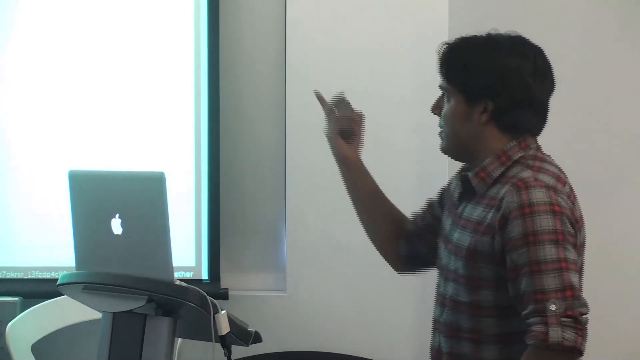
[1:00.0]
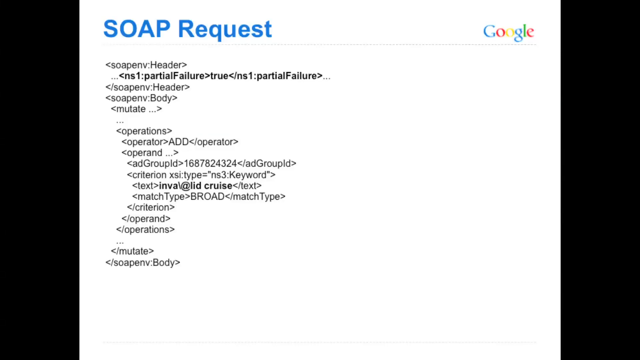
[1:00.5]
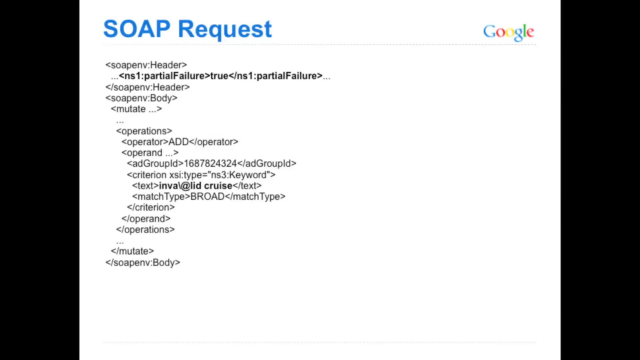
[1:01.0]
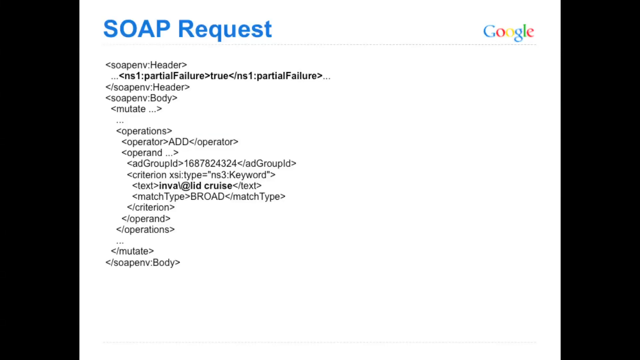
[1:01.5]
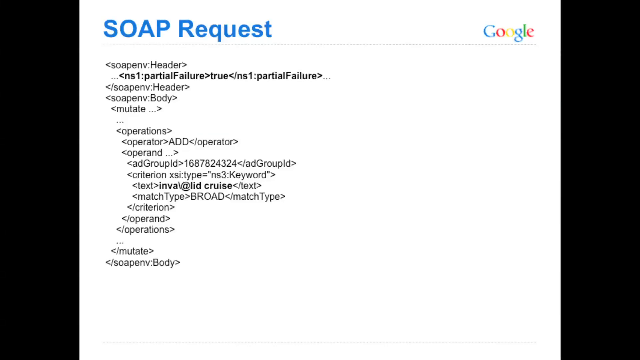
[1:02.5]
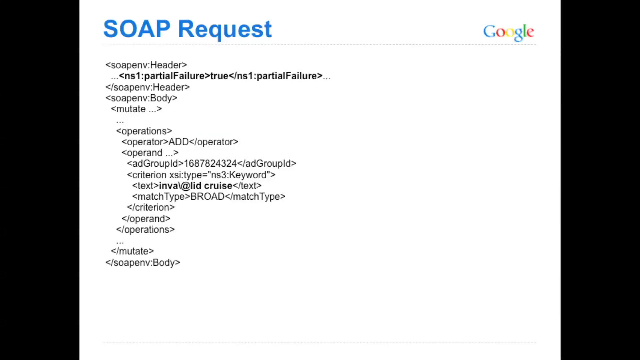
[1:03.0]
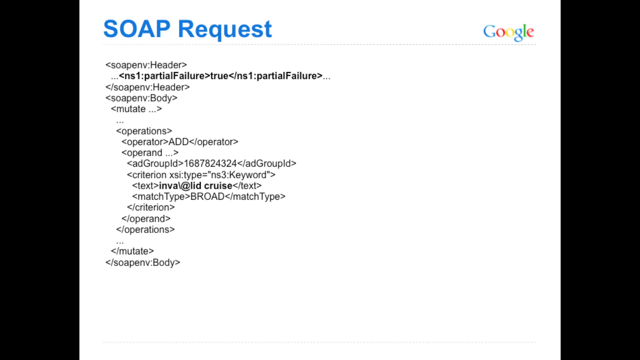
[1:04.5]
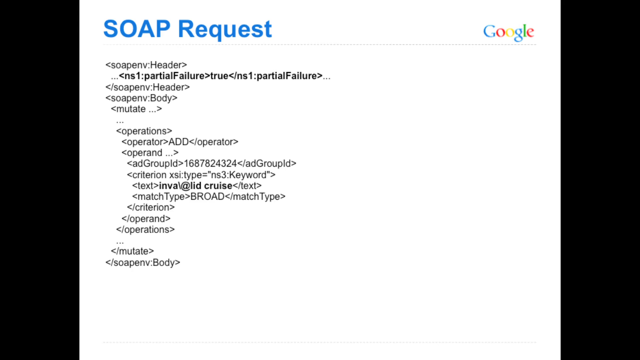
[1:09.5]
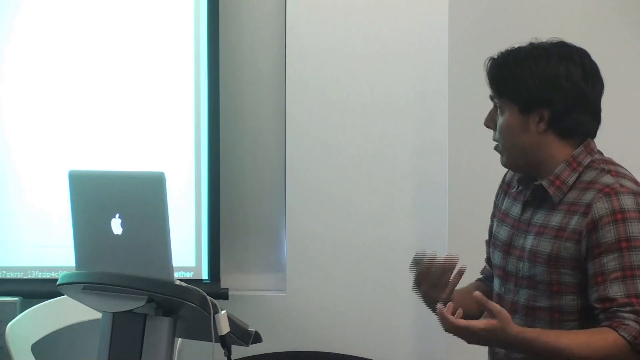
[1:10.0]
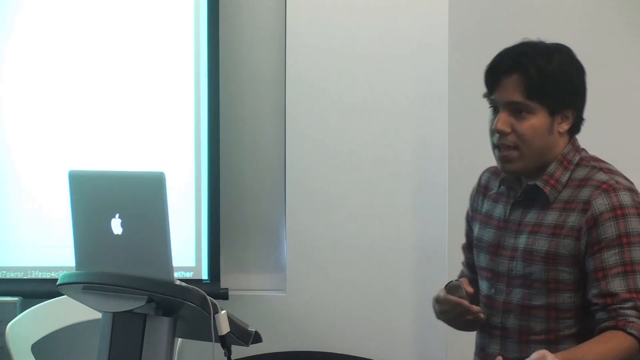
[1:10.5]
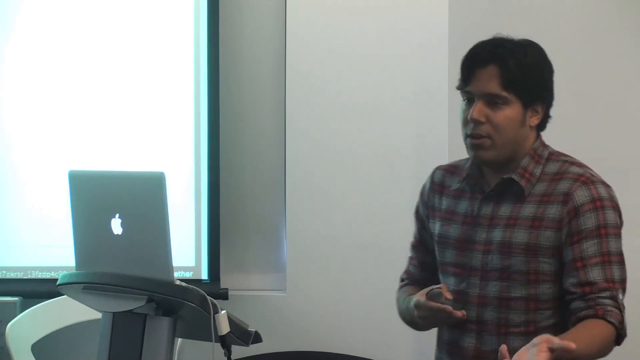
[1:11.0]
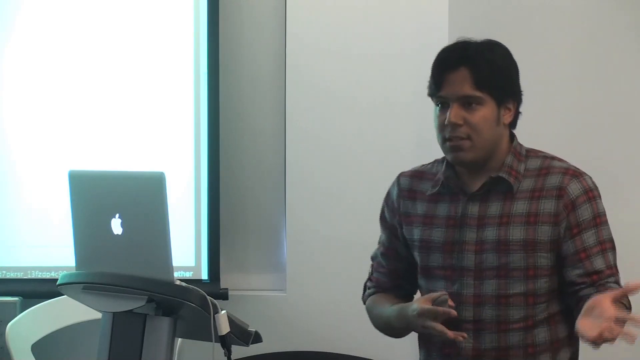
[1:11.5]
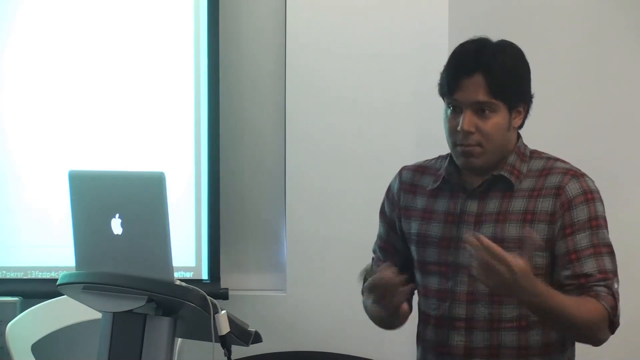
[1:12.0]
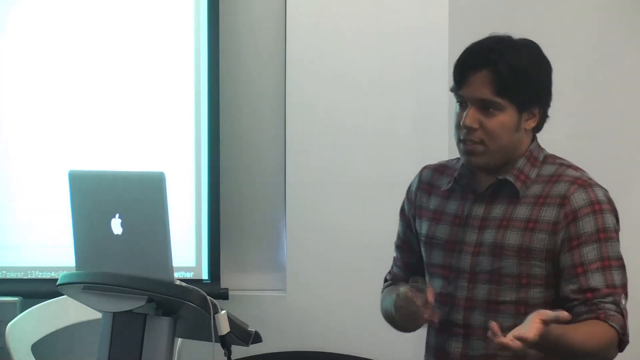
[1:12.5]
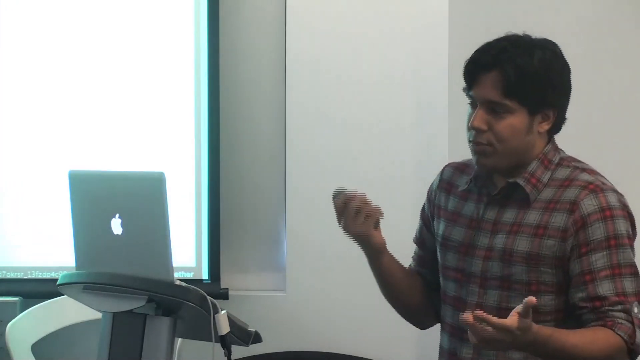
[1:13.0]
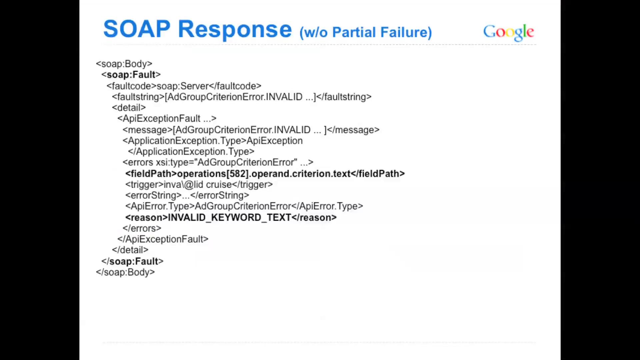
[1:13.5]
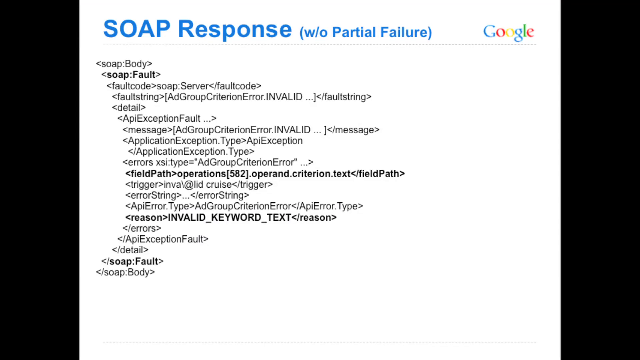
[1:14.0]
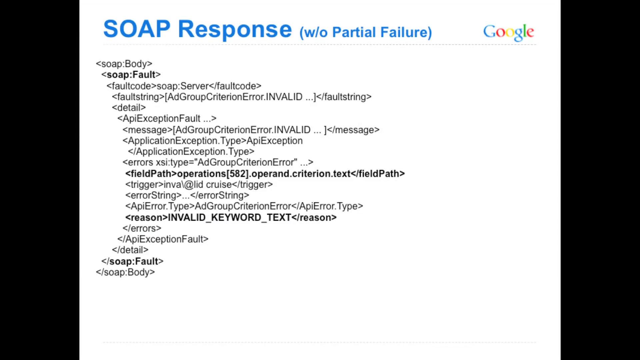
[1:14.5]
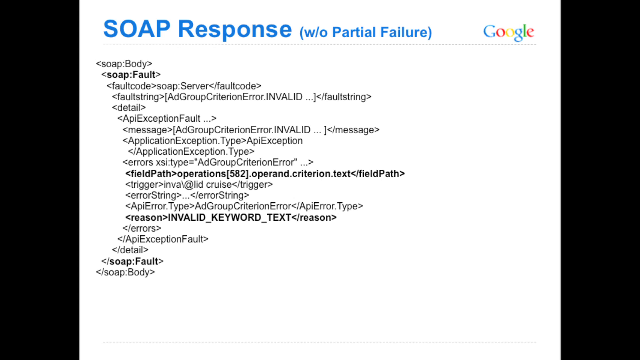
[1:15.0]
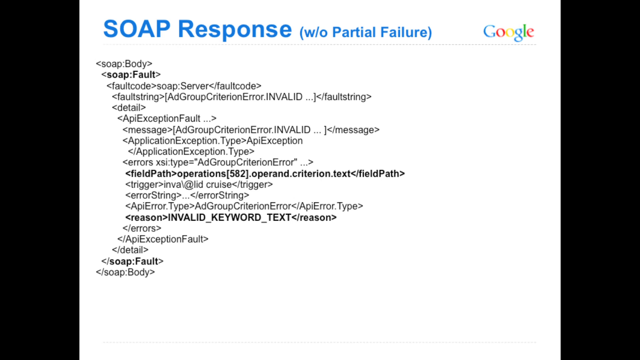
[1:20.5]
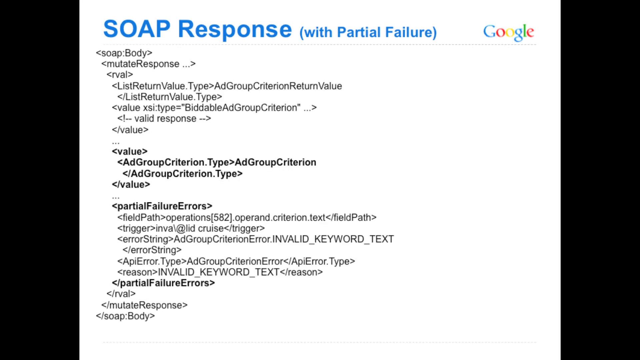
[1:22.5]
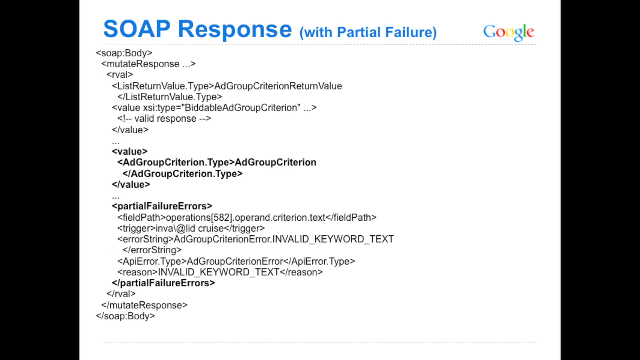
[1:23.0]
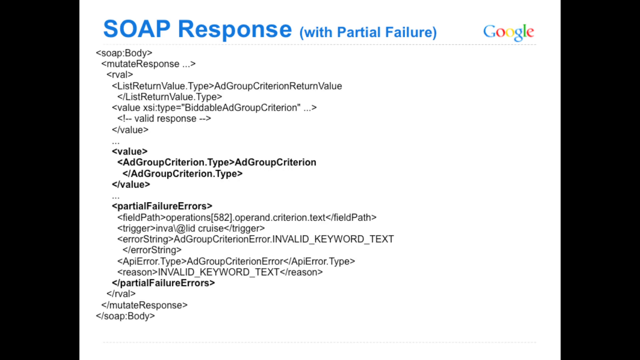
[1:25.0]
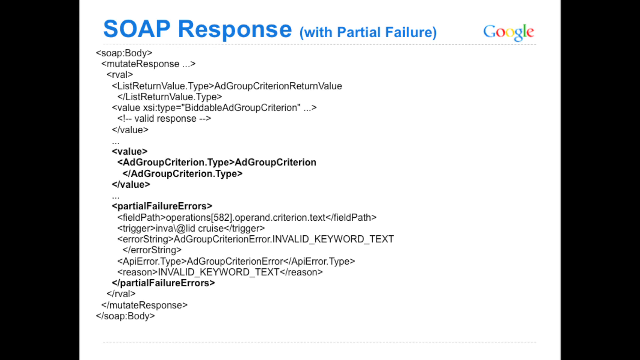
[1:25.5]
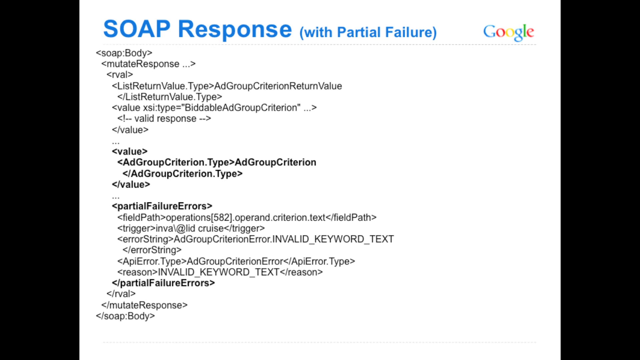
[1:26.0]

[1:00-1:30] The presenter holds up their right arm with a finger extended, pointing at a projected screen. The screen is very bright white, and its contents cannot be seen. The presentation moves to a different slide reading "SOAP requests," which seems to be written code, including "partial failure" and other code; it may be code for the earlier page, since it has some of the same numbers. The slide stays up for a good while. The camera pans to the person, whose hands move back and forth a little, swaying, as they seem to be explaining something, then pans back to the document on the screen.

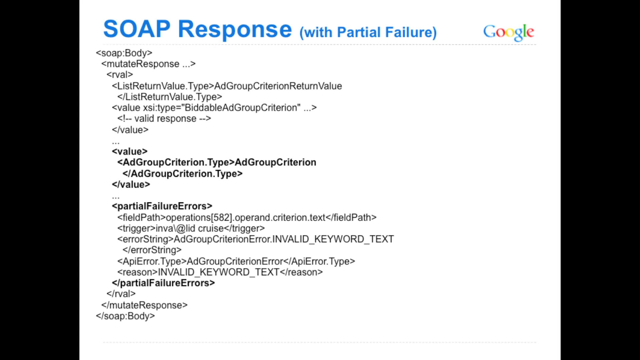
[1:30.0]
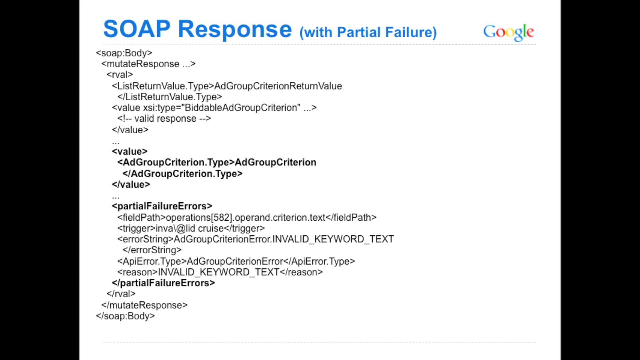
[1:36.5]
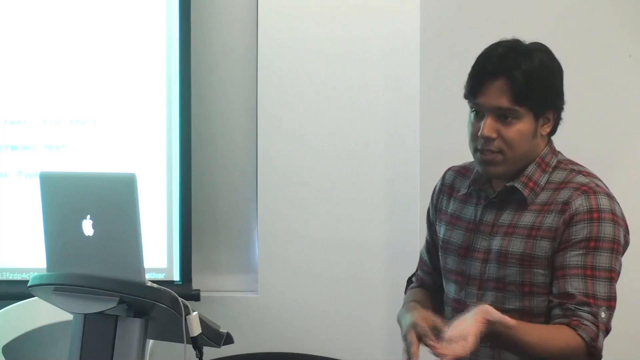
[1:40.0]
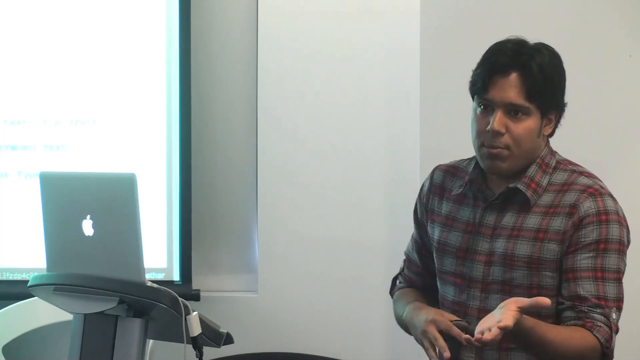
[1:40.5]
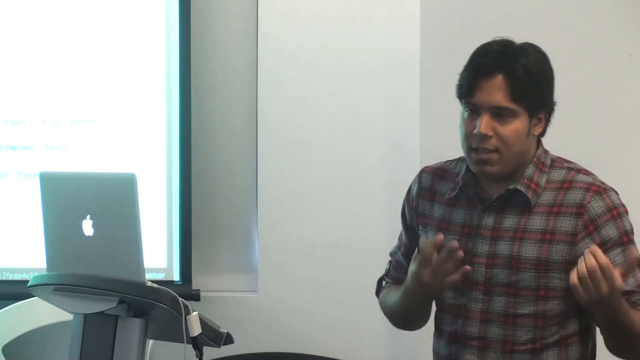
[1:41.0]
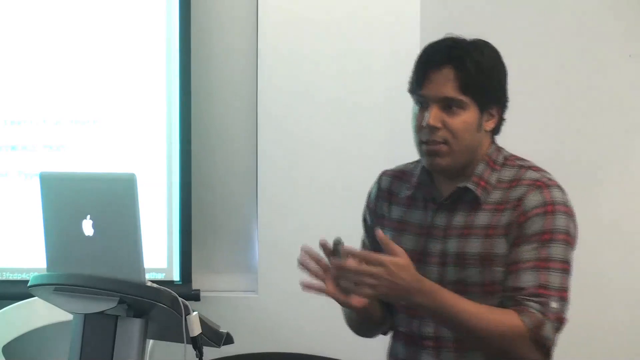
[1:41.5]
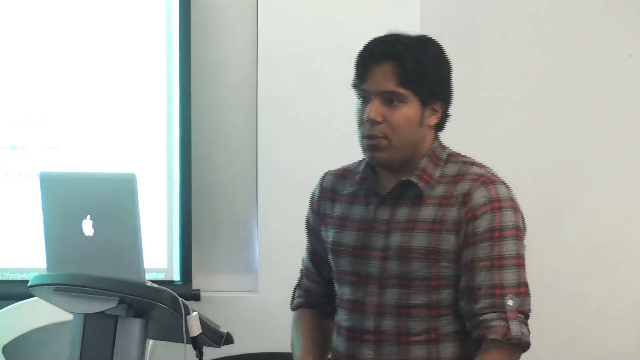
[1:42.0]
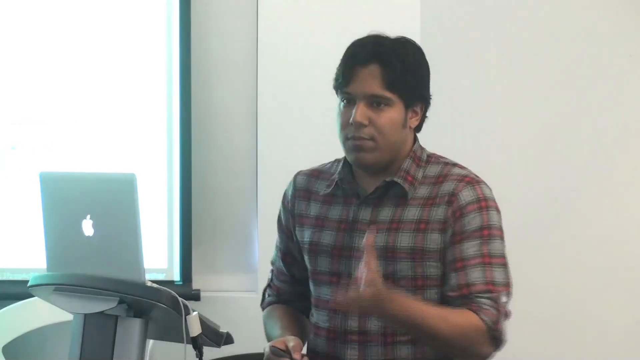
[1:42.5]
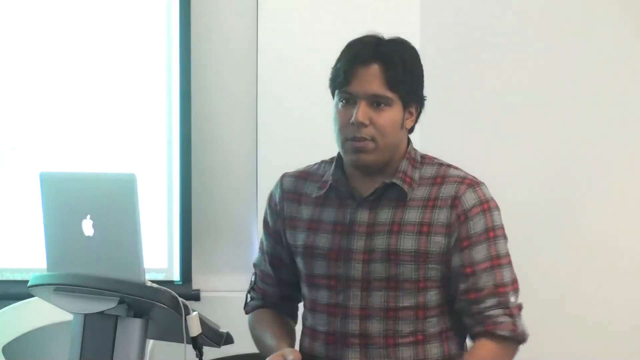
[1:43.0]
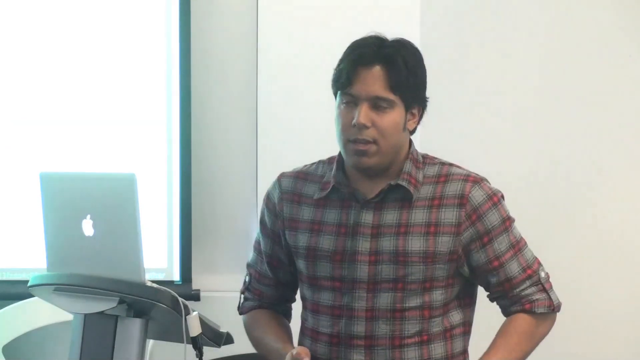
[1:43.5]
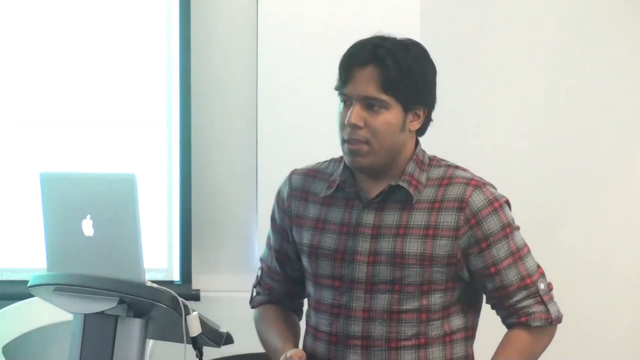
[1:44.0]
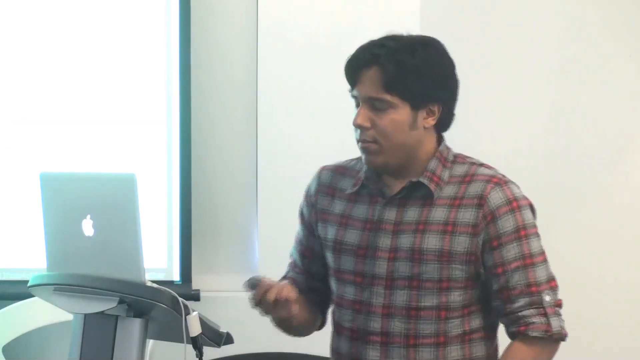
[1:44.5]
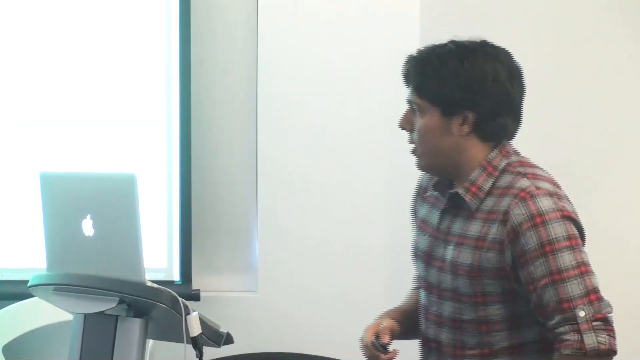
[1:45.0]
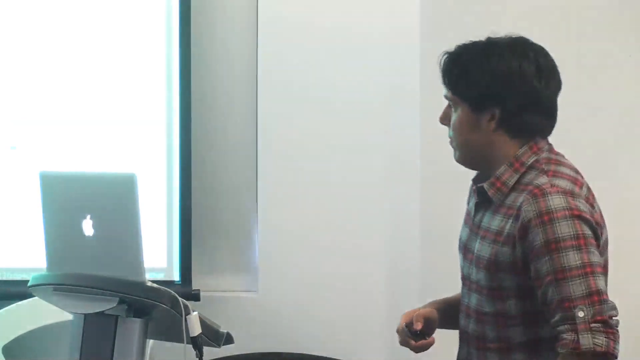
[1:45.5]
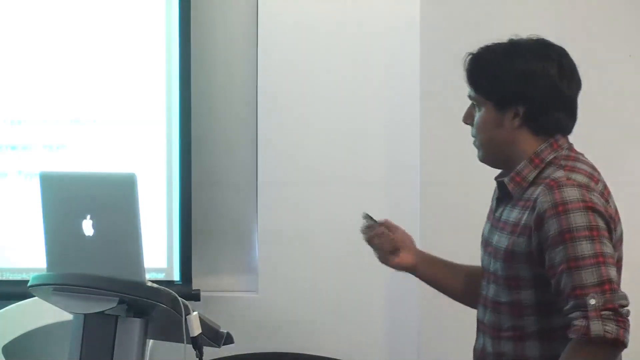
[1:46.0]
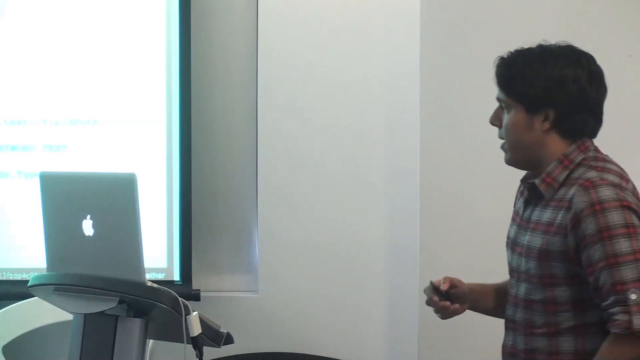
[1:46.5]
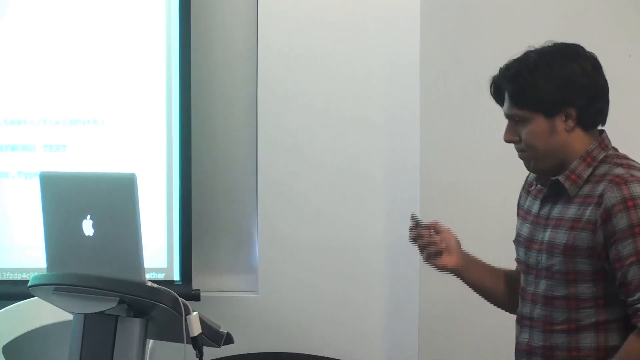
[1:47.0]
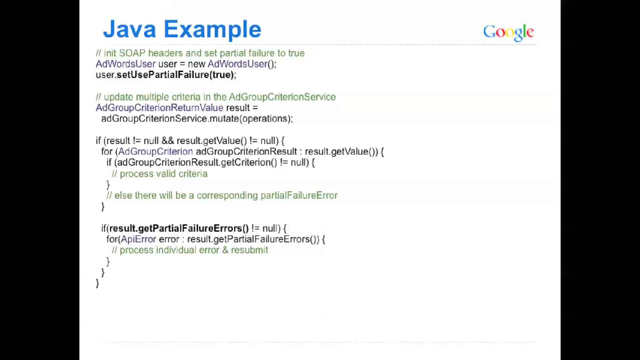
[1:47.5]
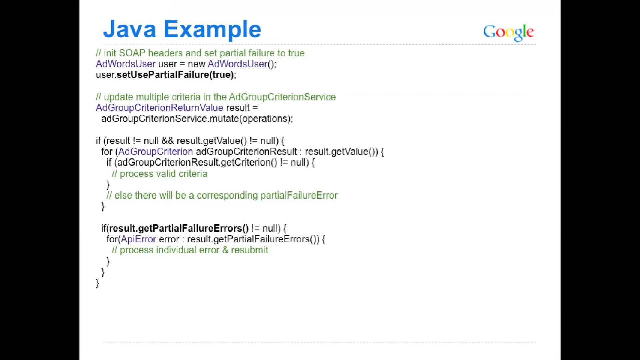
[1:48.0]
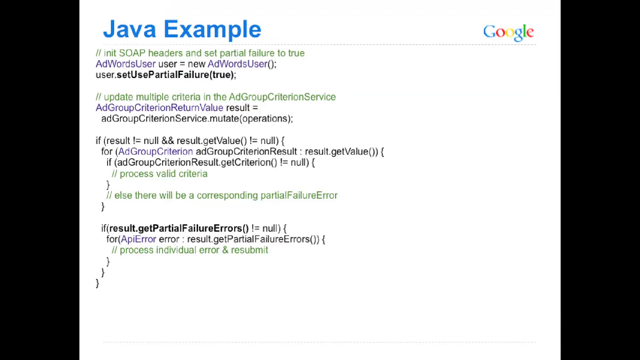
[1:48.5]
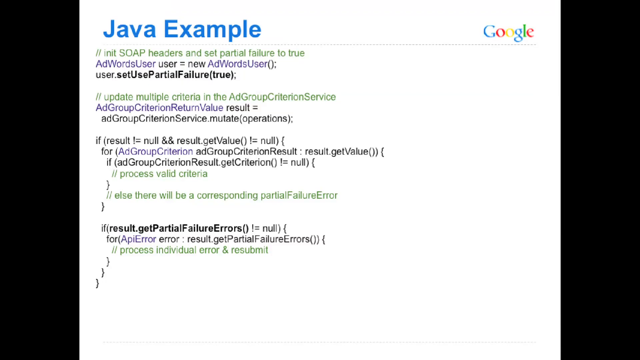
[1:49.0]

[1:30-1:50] A different slide reads "SOAP response" followed by parentheses containing "with partial failure," with the Google logo next to it and a dotted line underneath. Below are "body," "response," and other text that seems to be formatted as code, probably in spacing and color. The presenter then appears, seeming to explain and teach as they gesture with their hands, smiling slightly. The man turns slightly as he is about to click the device, looks at the bright screen, and a slide titled "Java example" appears with details.